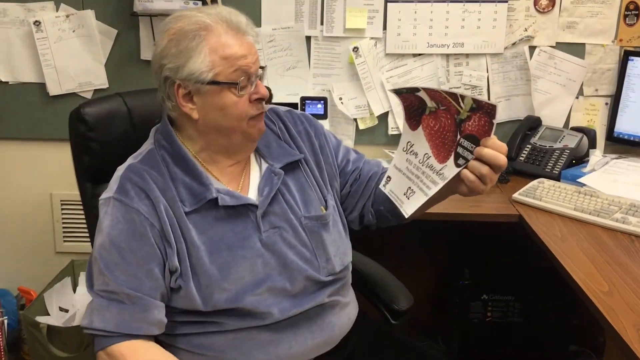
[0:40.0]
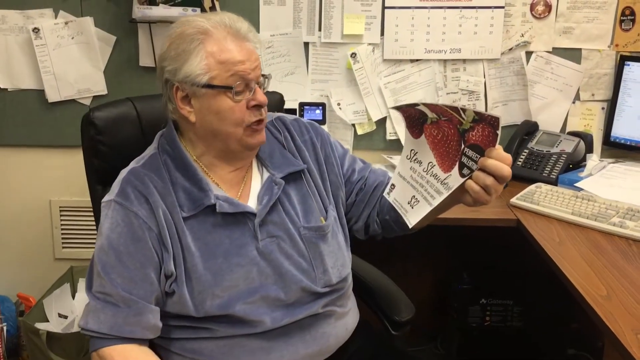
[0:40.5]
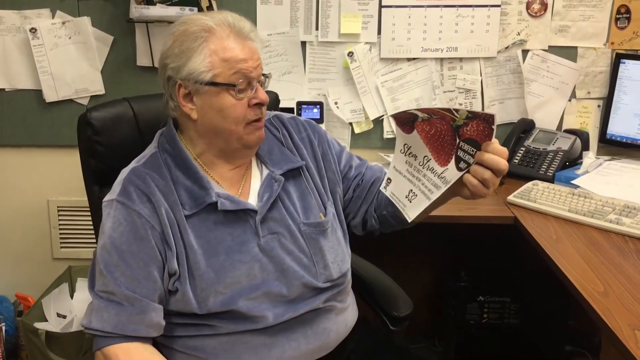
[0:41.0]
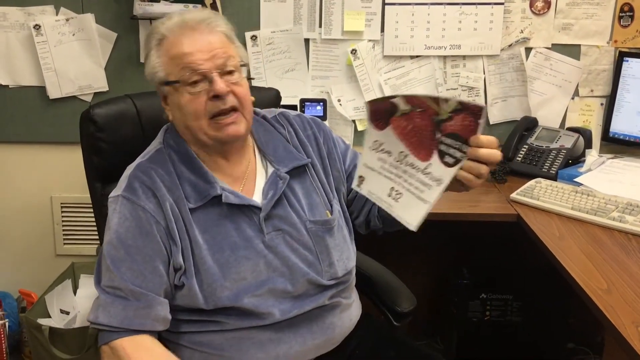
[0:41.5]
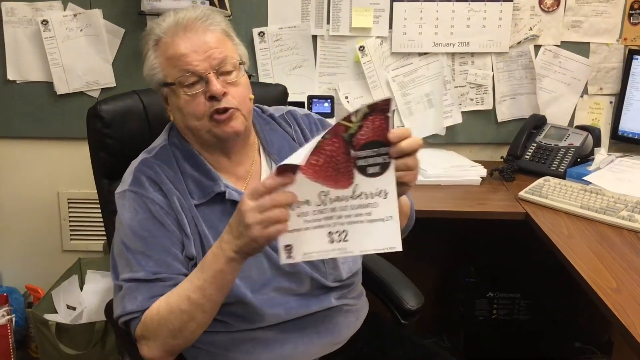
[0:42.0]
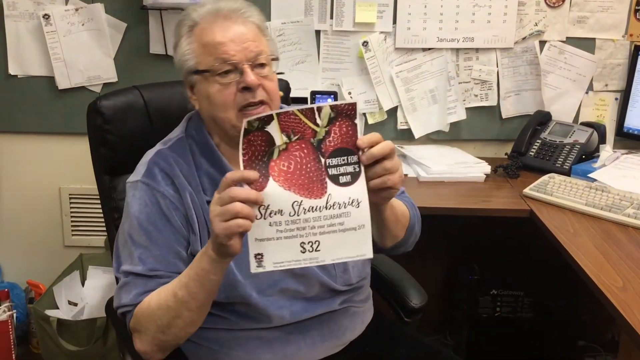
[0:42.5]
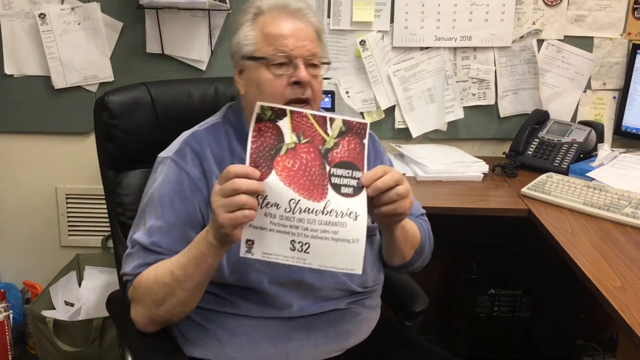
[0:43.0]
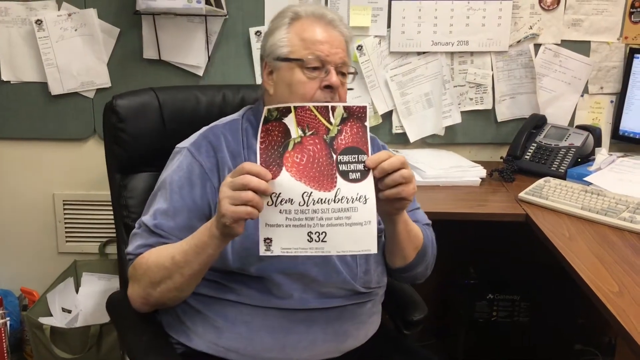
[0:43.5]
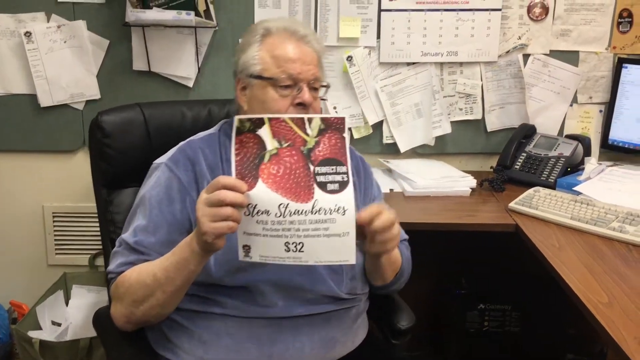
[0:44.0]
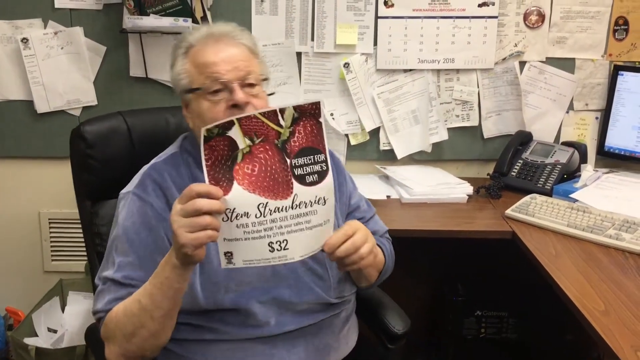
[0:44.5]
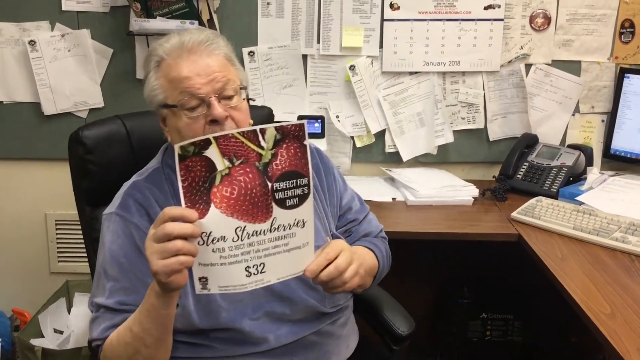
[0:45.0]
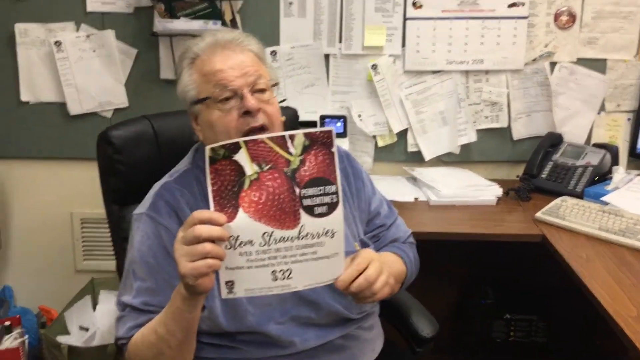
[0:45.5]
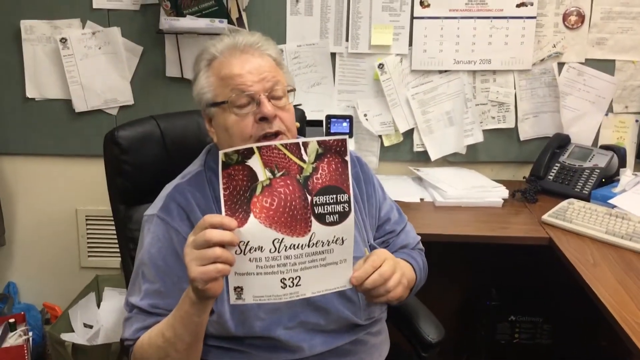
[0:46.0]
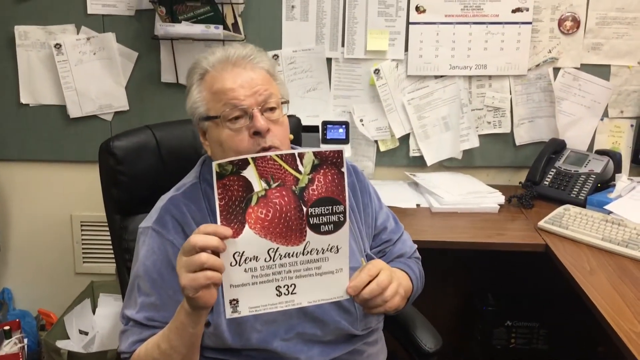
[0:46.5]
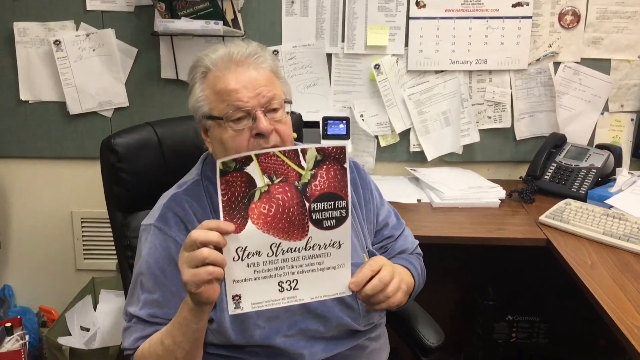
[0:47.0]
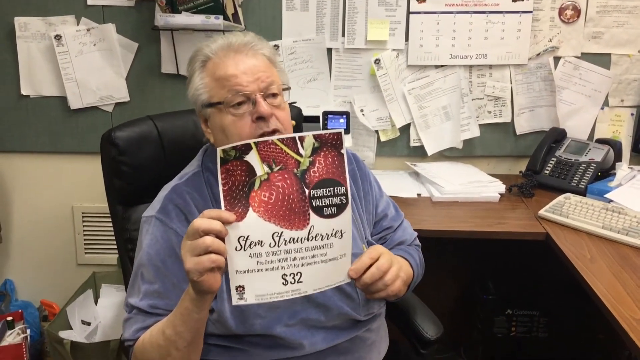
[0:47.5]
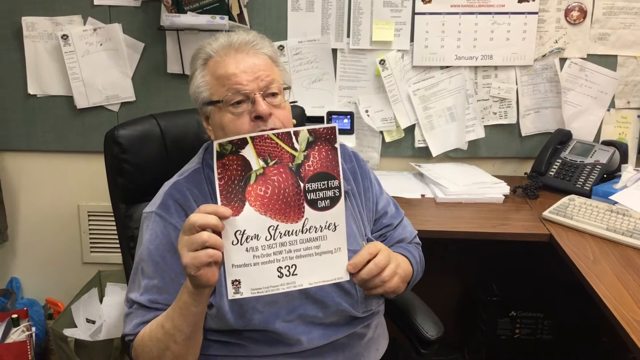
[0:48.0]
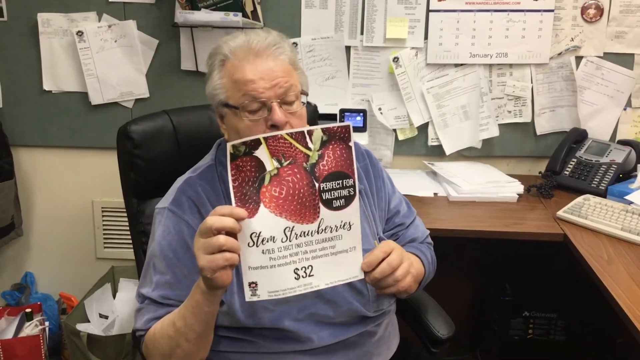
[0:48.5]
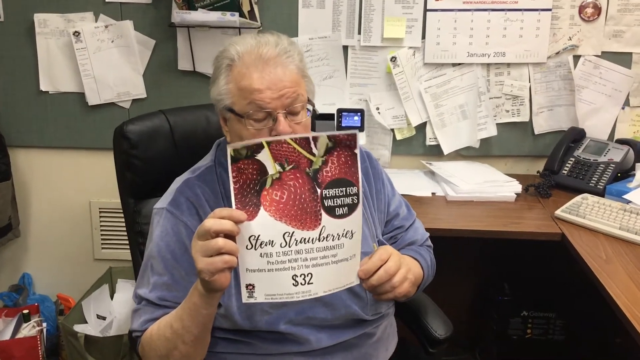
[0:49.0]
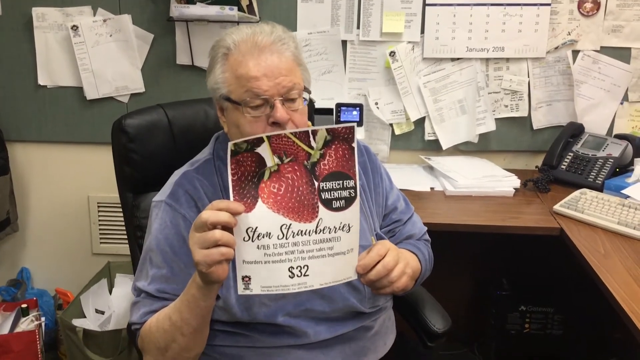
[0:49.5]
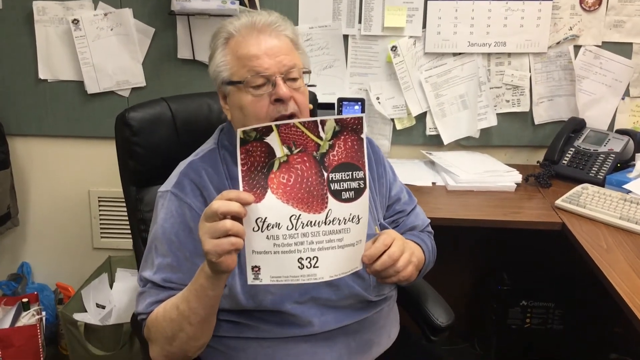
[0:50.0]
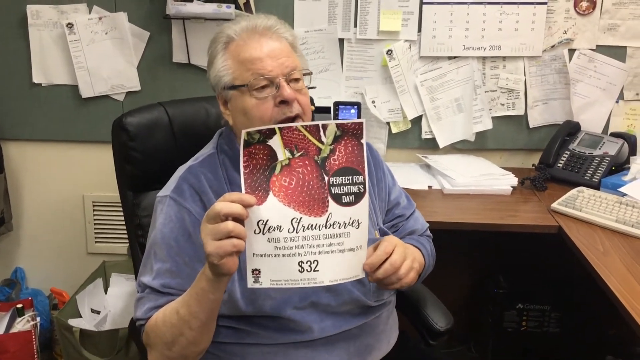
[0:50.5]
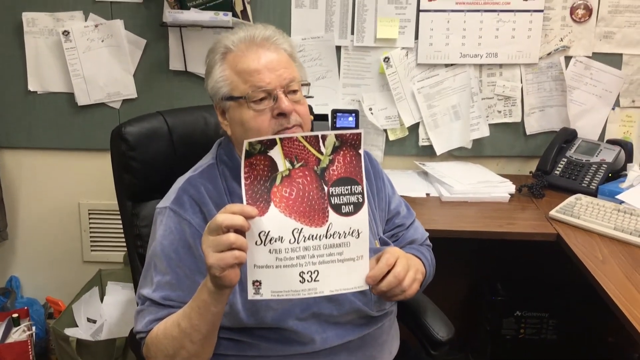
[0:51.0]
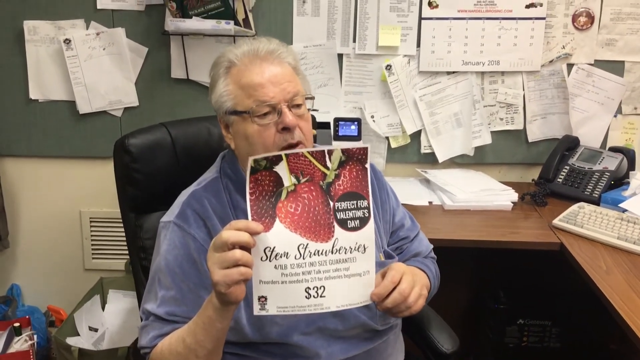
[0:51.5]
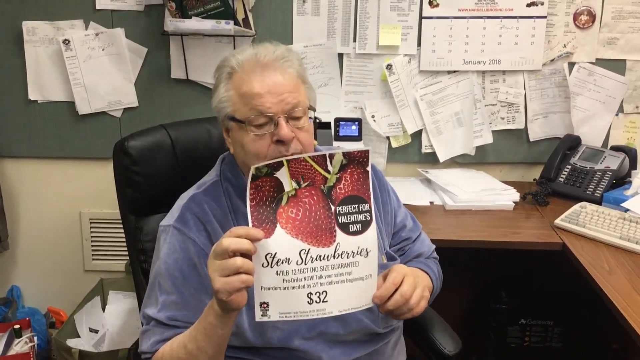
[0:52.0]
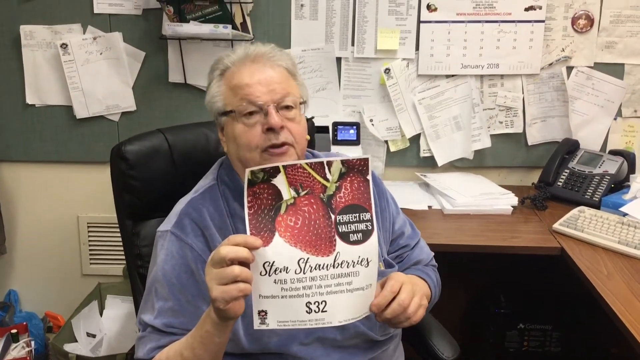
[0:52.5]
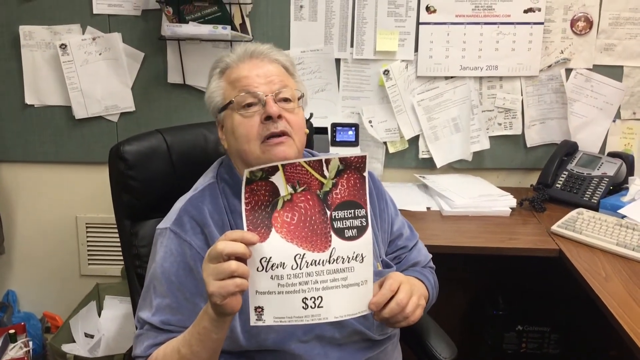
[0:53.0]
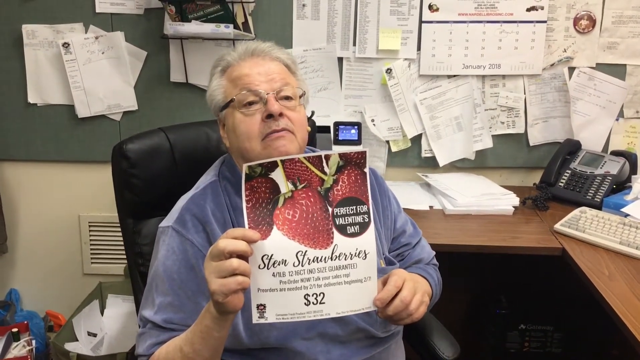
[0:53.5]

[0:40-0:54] The man continues to talk, now holding the paper with both hands in front of him. The paper slightly covers his face, covering his mouth area, but his mouth can still be seen moving as he talks very fast. He keeps looking beyond him to the right side as he talks. He wears glasses and sits on a black office chair. To the right is a wooden desk with a computer and a telephone on it. Many papers are pinned to and hang on the wall.